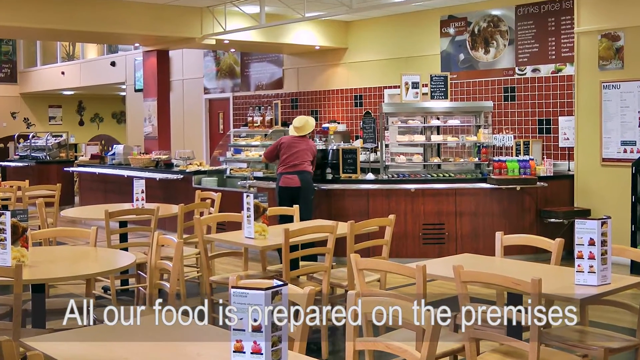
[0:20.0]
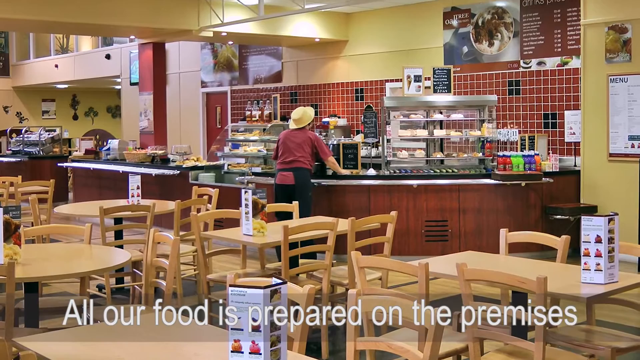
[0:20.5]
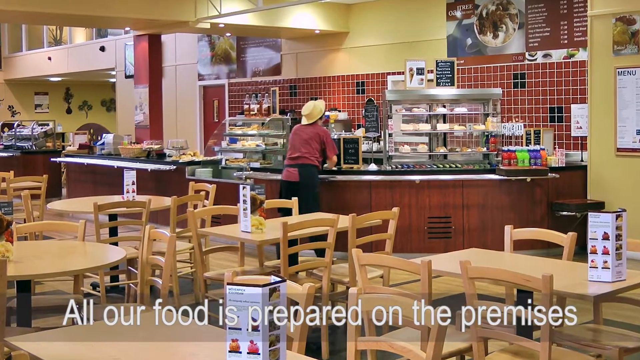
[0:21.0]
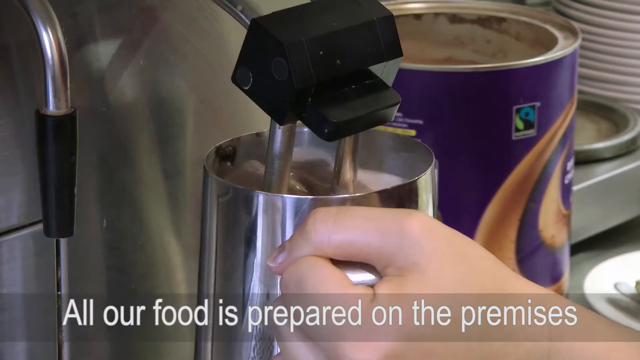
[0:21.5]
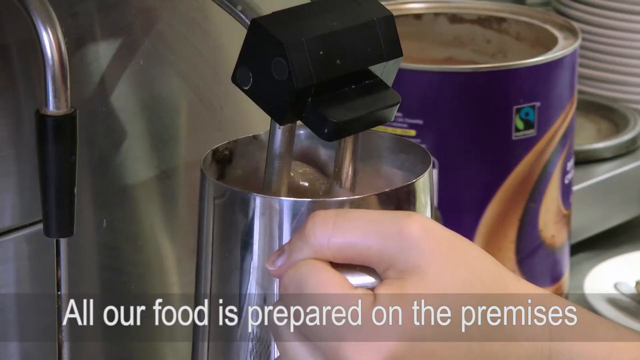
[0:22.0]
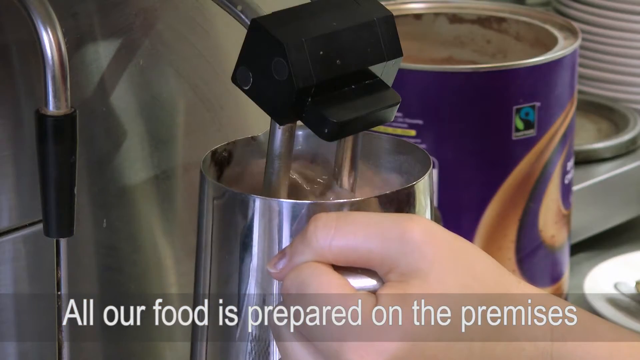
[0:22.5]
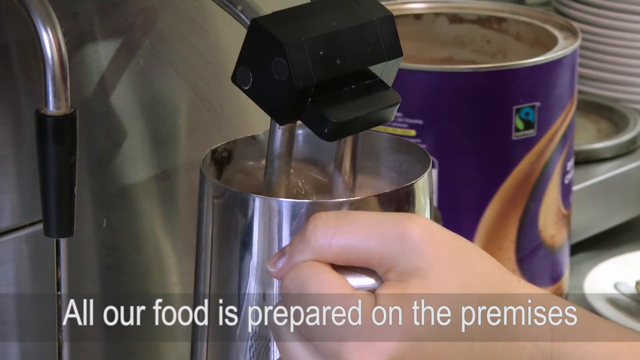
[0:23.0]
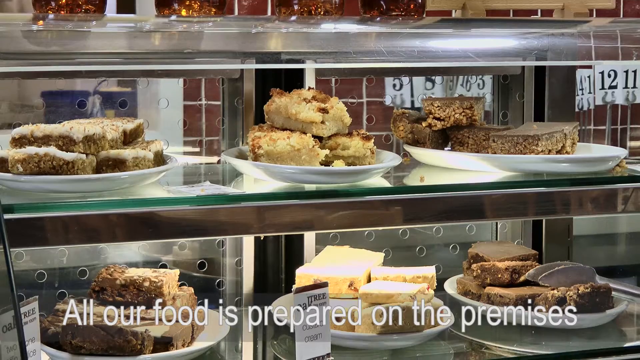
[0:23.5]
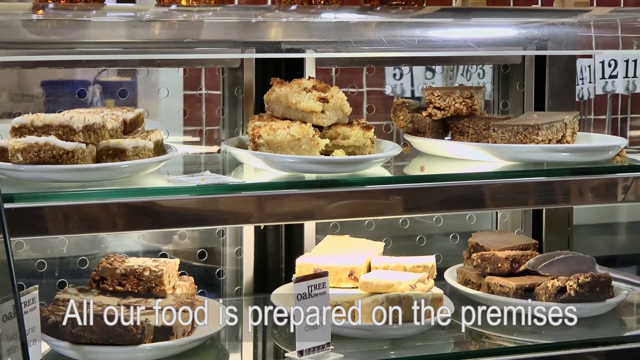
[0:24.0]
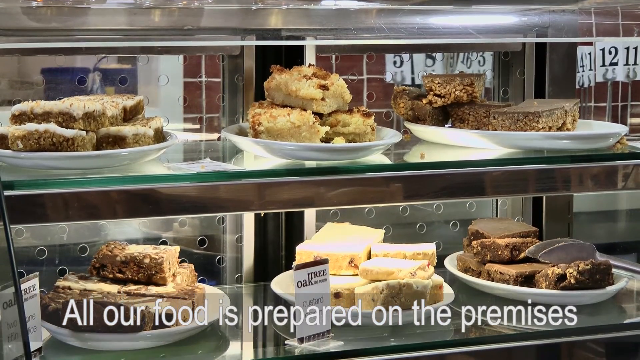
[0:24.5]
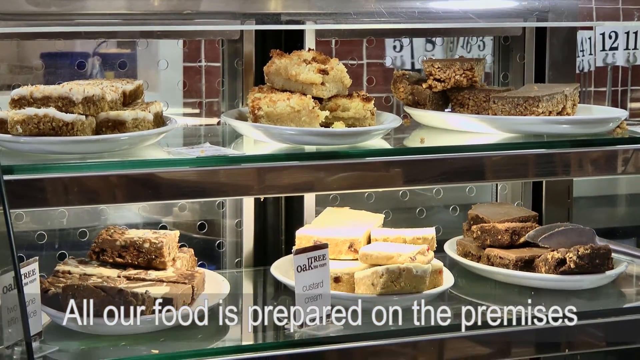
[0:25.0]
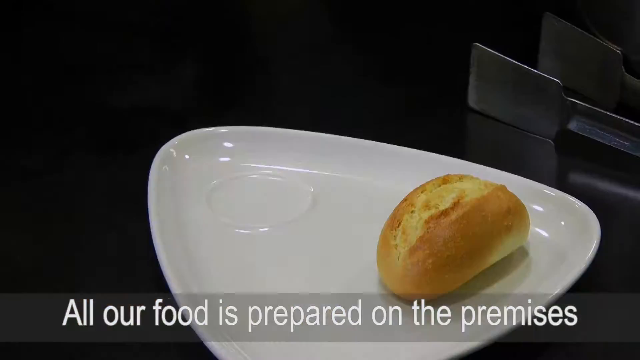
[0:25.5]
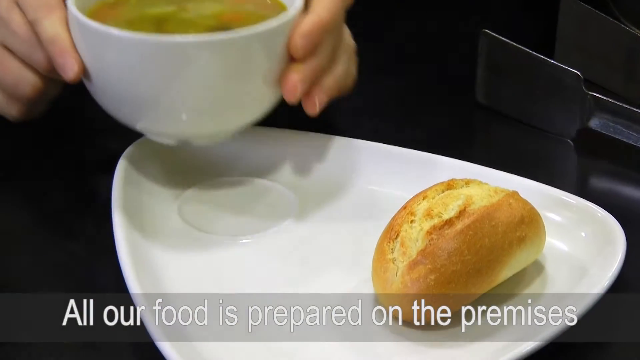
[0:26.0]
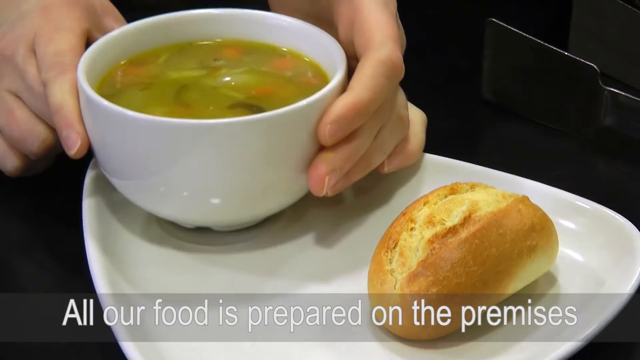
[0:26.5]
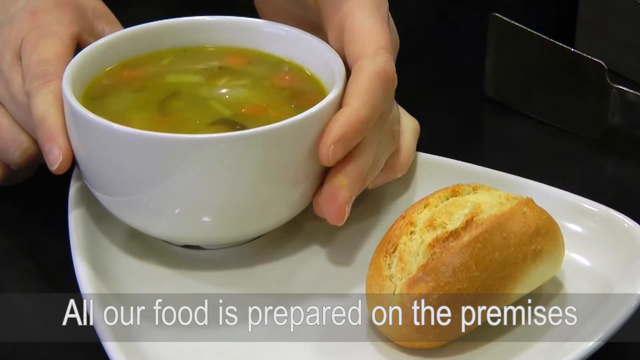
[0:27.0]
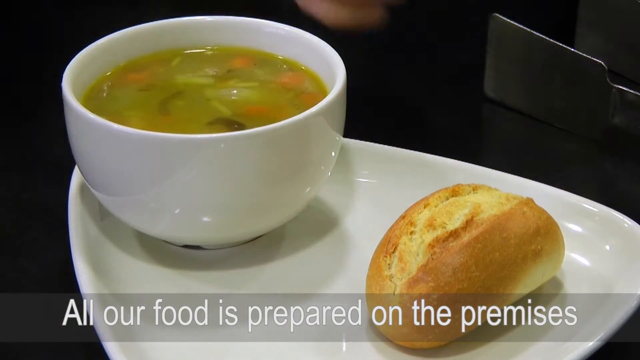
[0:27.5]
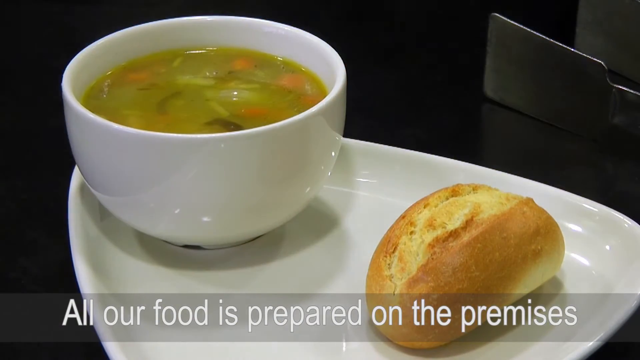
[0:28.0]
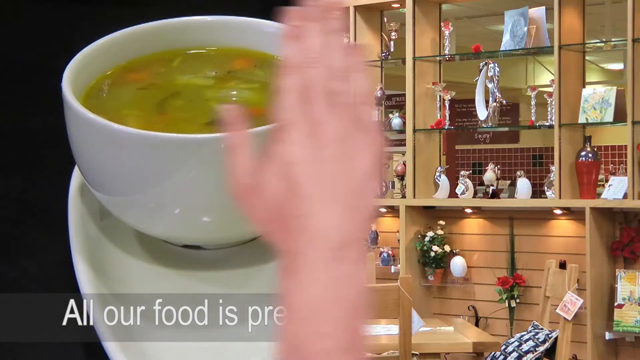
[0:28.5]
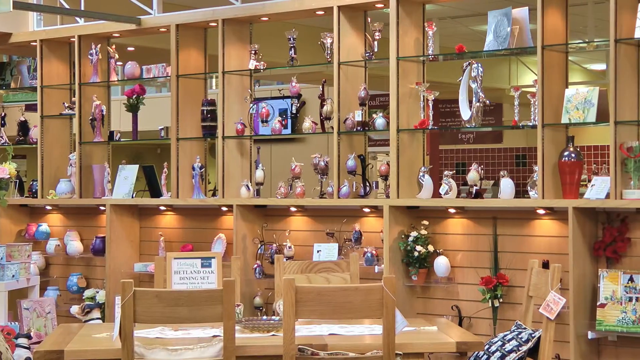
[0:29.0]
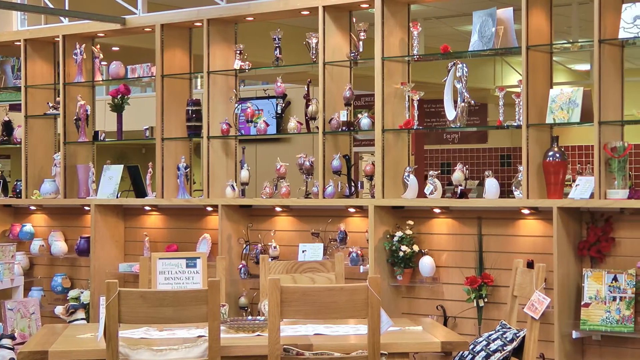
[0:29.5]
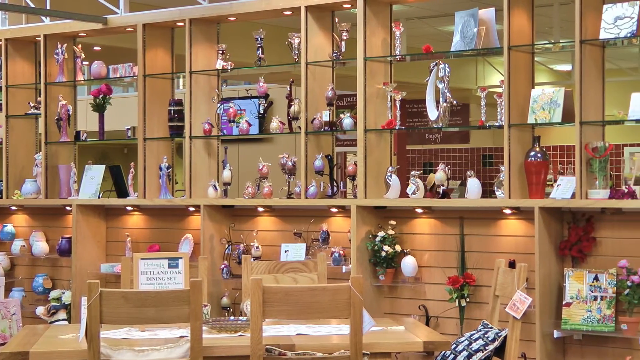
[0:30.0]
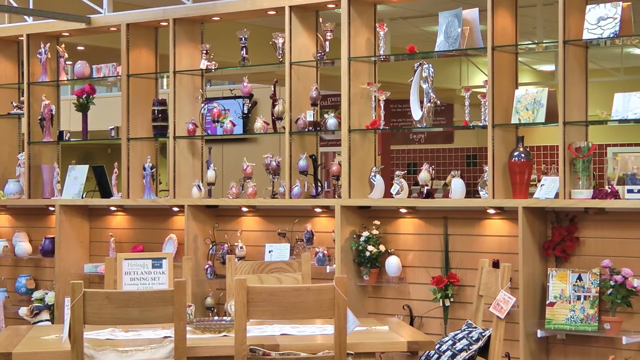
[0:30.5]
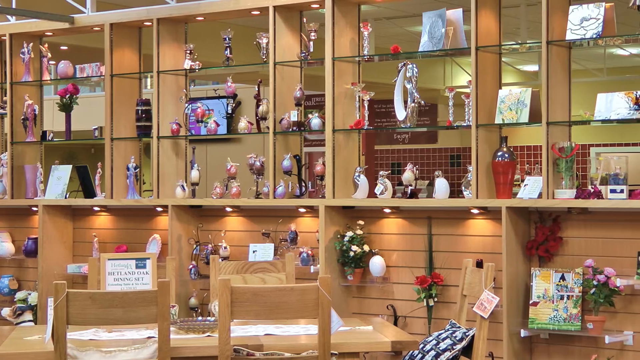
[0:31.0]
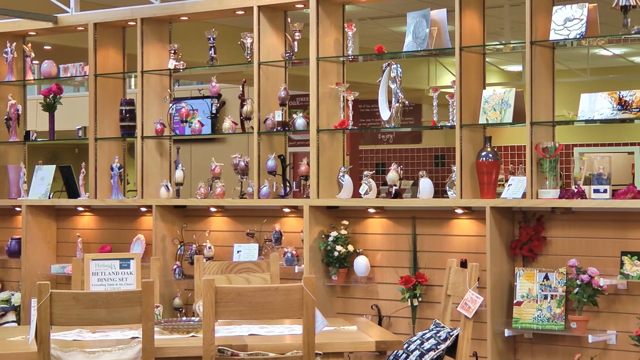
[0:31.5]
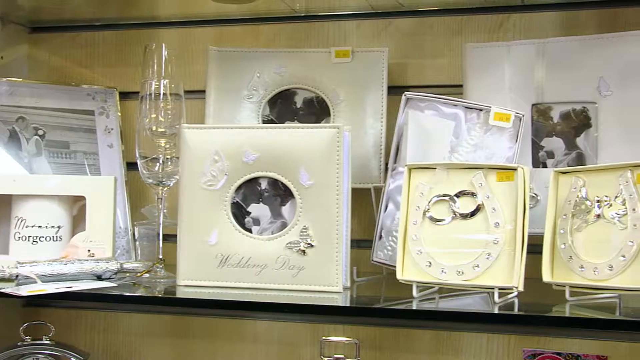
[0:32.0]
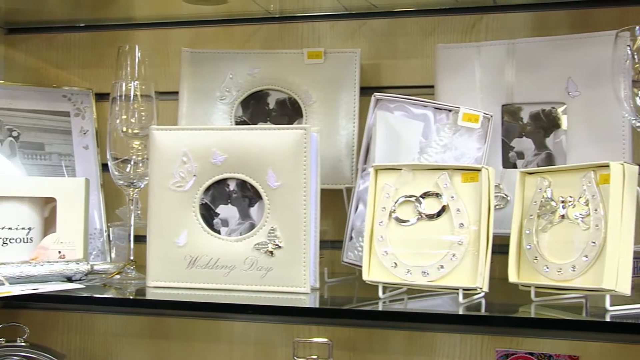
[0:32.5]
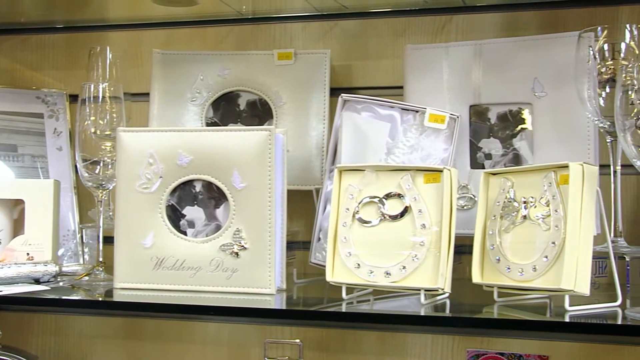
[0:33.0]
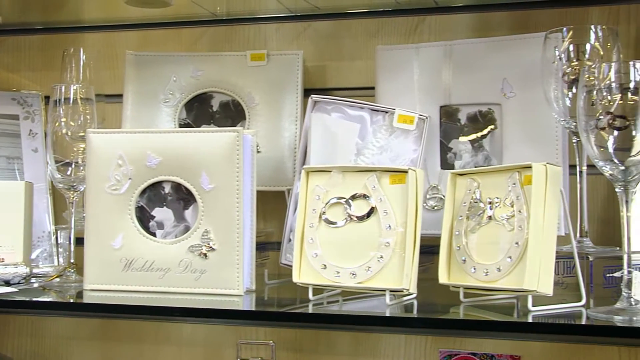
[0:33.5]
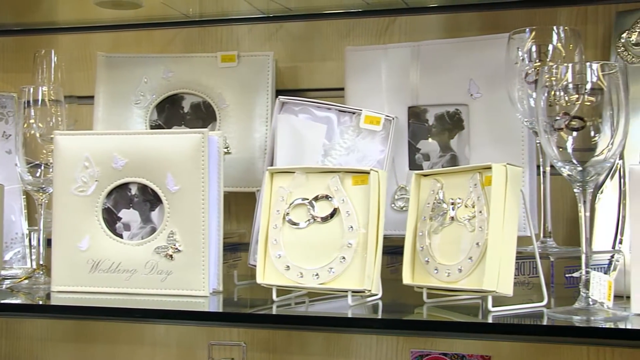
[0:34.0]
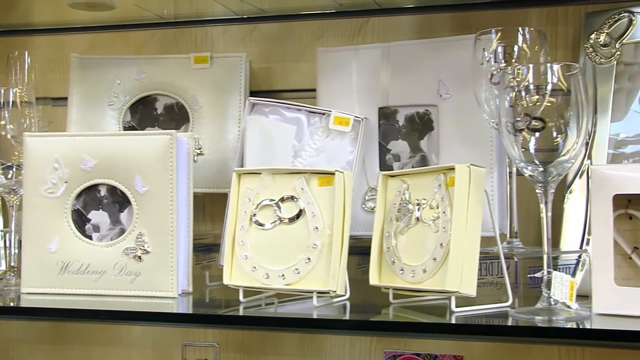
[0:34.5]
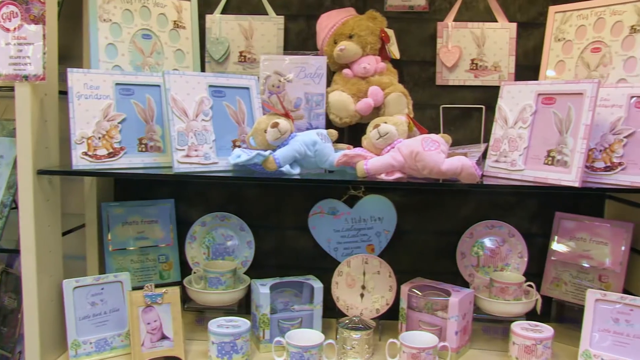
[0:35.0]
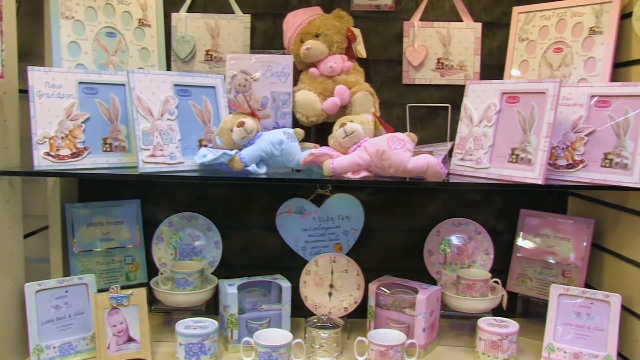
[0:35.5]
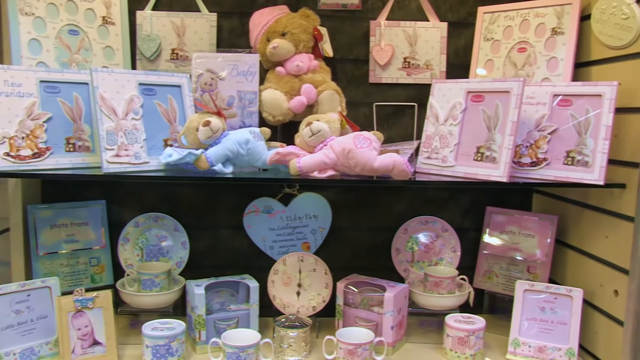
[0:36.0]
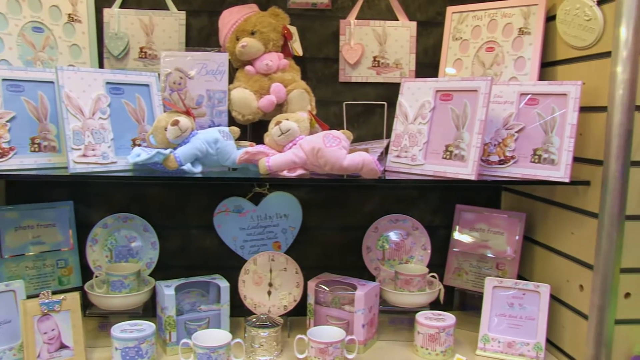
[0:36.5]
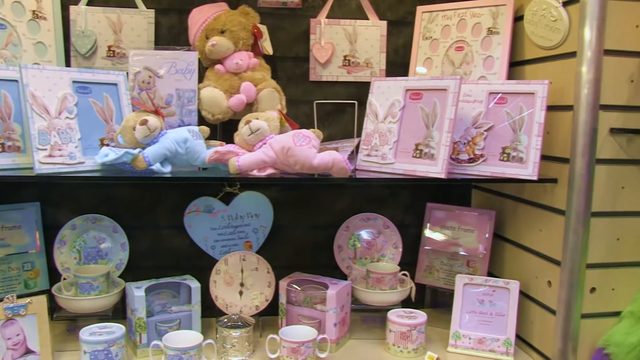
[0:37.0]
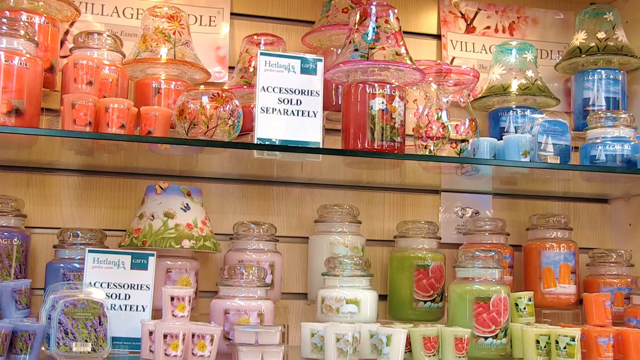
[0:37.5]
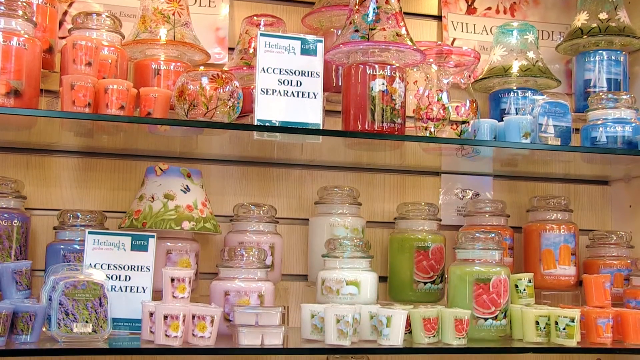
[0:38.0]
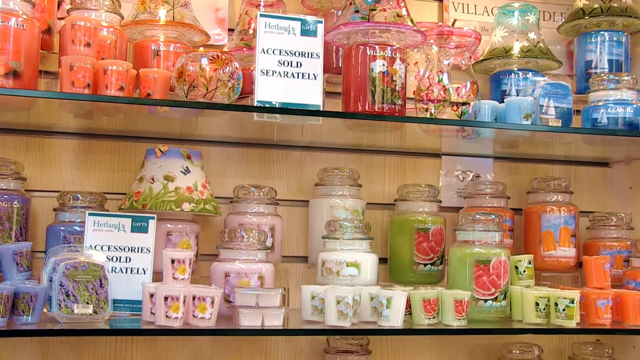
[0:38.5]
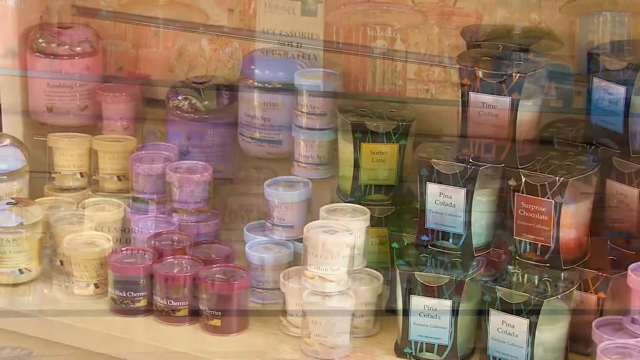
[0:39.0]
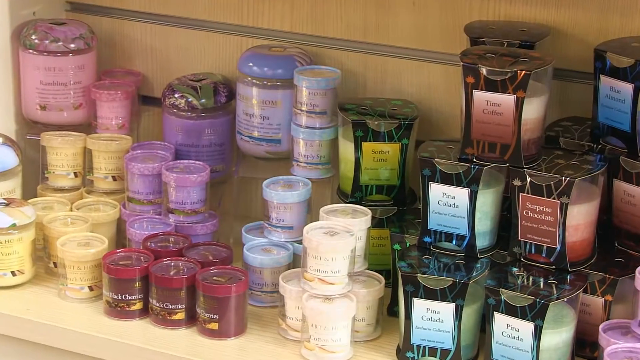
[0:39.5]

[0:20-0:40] The room has a lot of yellow in it: yellow walls, a yellow ceiling and yellow floors. The tables and chairs are a somewhat yellowish tan wood. There appears to be a kitchen area with food on it, and bottles of different colors, such as greens and reds. Behind it is a small tile brick wall, mostly red with a few black squares in places. A customer in a tan hat, a somewhat burgundy shirt and black pants is at the counter. A close-up shows what may be coffee, with text reading "all our food is prepared on the premises"; liquid is poured into a cup. A close-up shows brownies and Rice Krispie treats, with numbers such as 12, 11, 16 and 3 in the background. Next comes a cup of green soup in a white bowl with what looks like carrots in it, and a roll on a triangular plate.